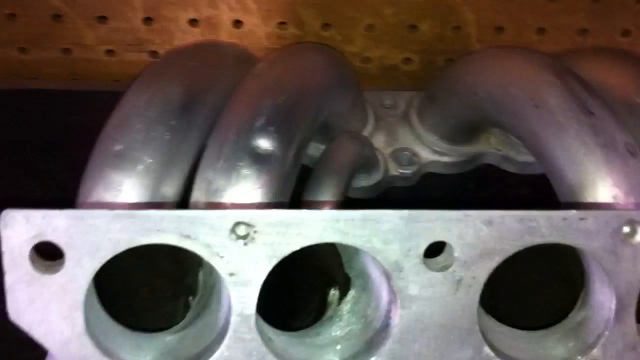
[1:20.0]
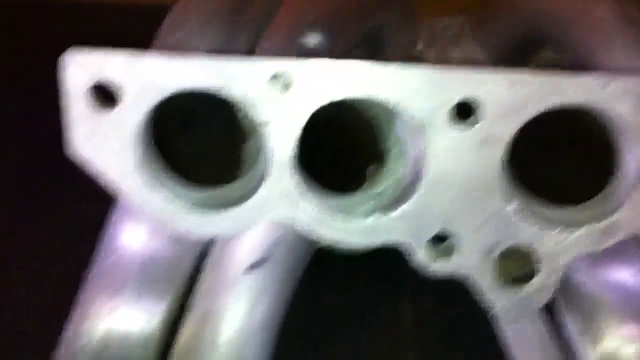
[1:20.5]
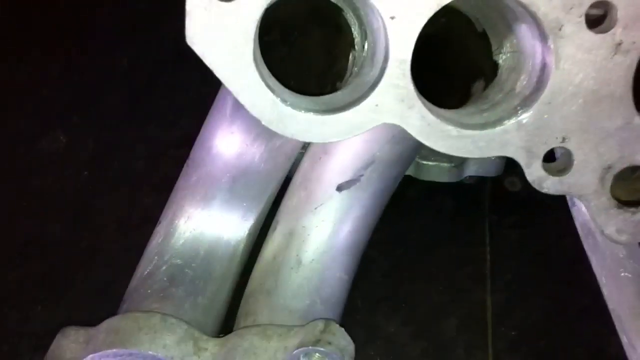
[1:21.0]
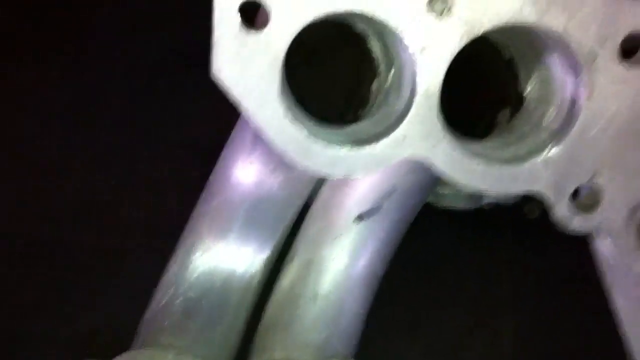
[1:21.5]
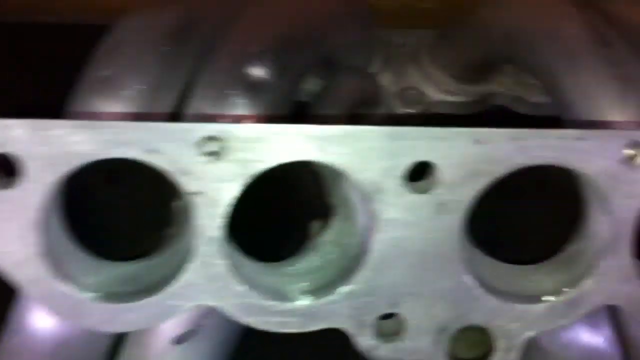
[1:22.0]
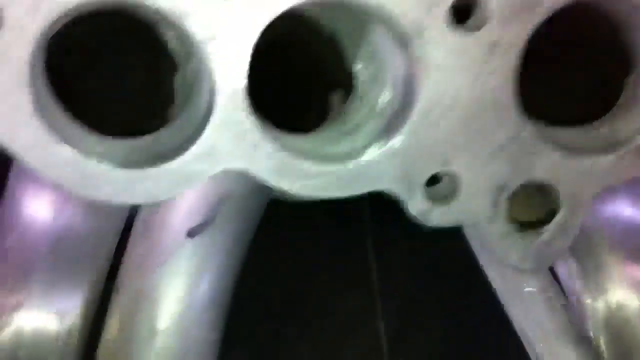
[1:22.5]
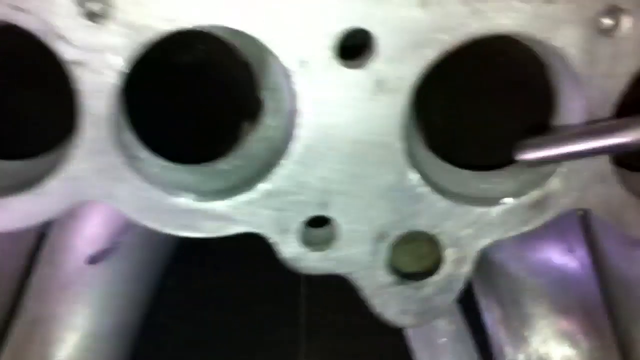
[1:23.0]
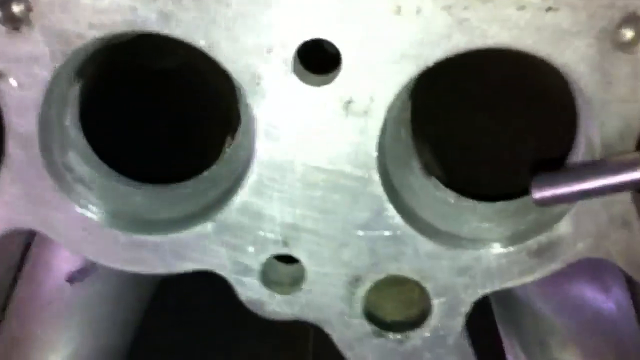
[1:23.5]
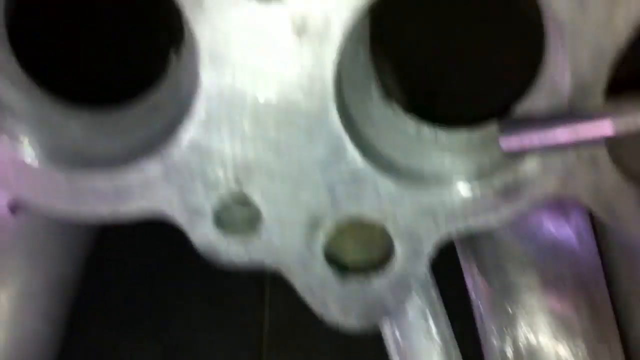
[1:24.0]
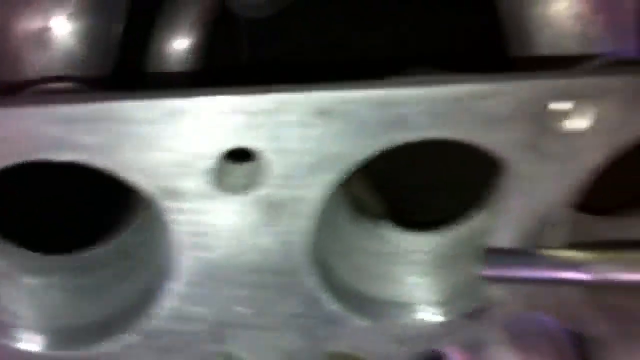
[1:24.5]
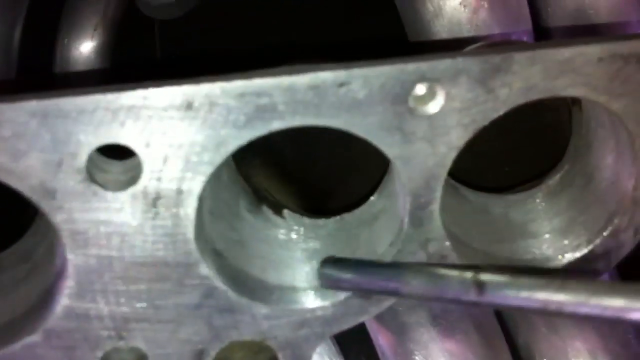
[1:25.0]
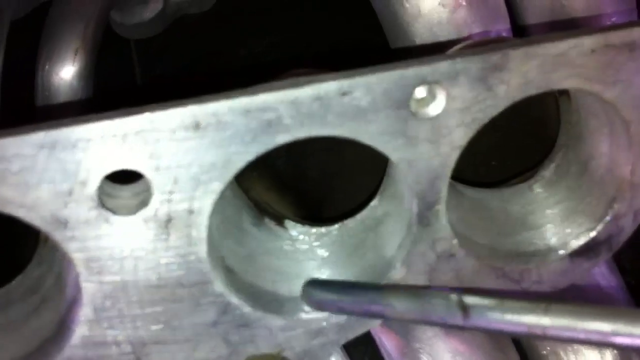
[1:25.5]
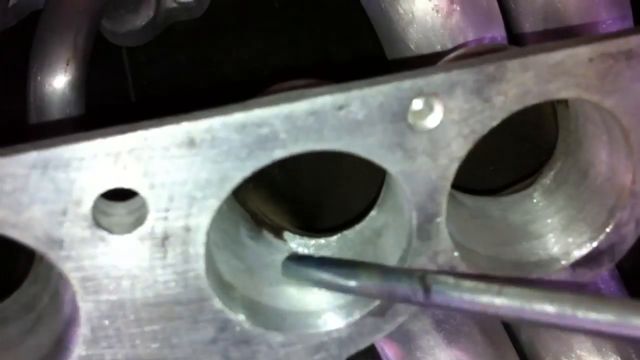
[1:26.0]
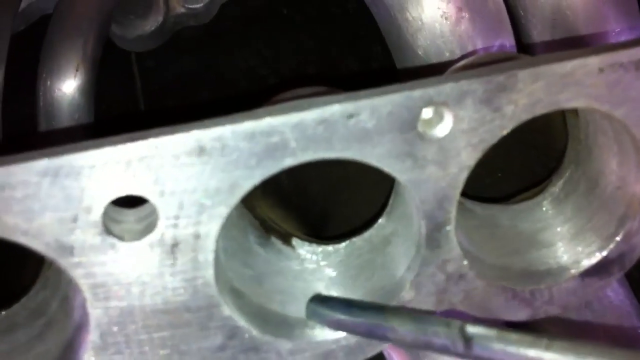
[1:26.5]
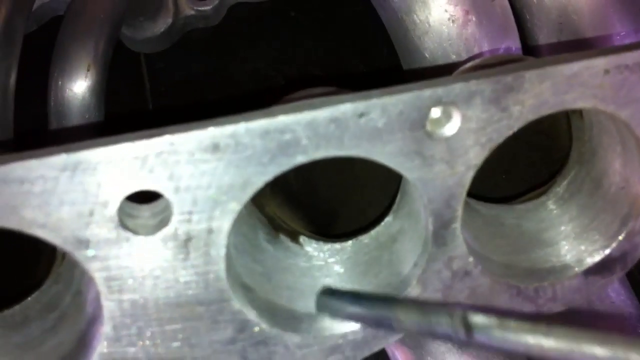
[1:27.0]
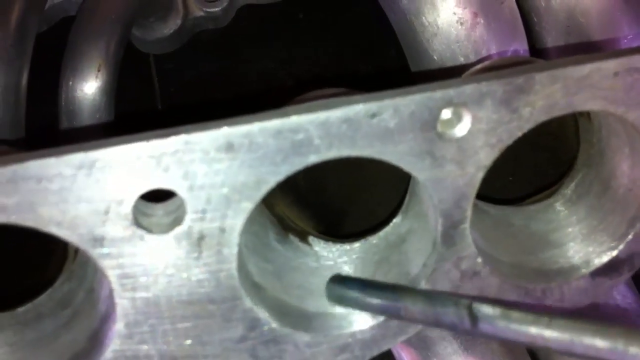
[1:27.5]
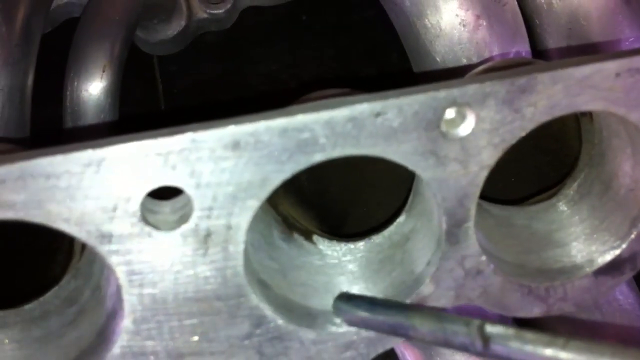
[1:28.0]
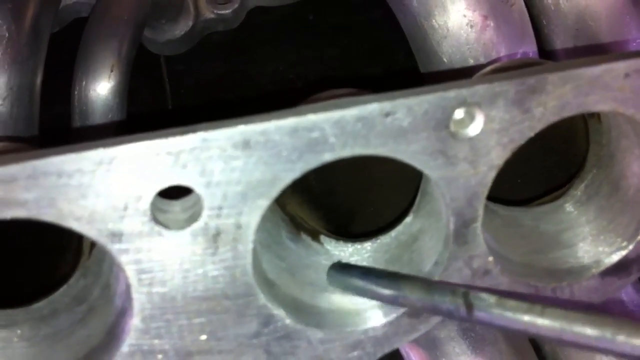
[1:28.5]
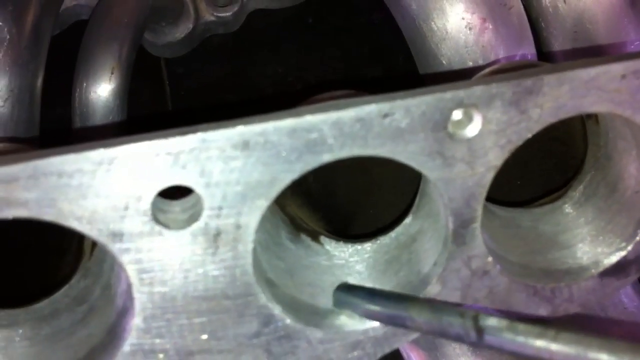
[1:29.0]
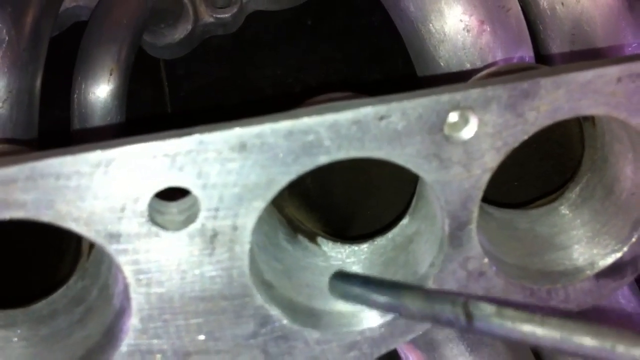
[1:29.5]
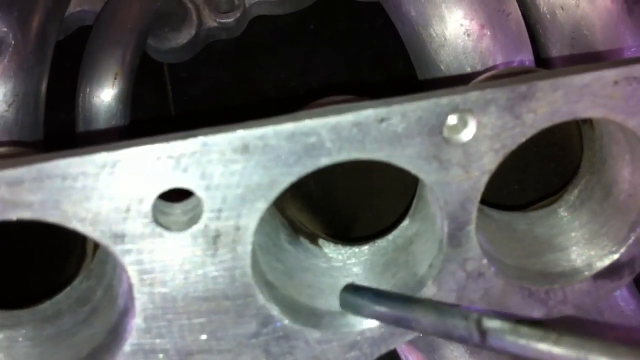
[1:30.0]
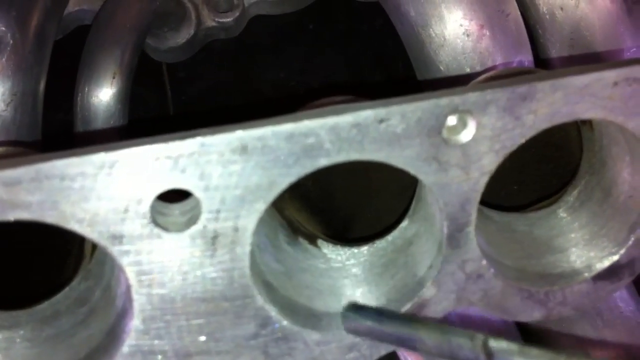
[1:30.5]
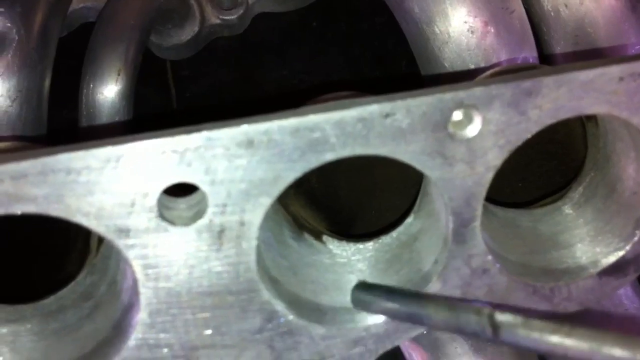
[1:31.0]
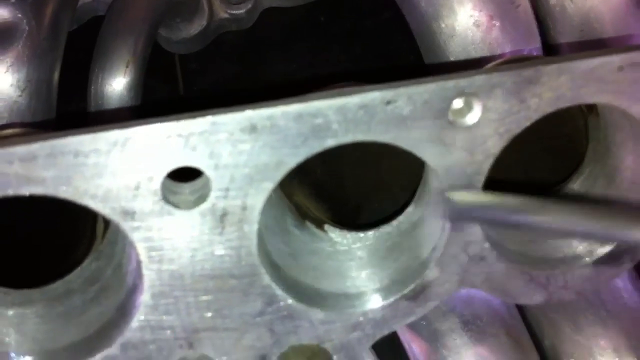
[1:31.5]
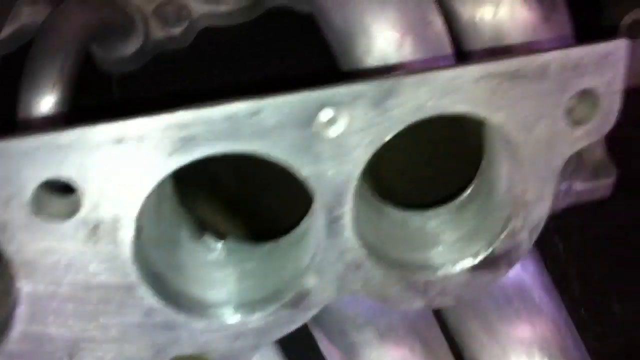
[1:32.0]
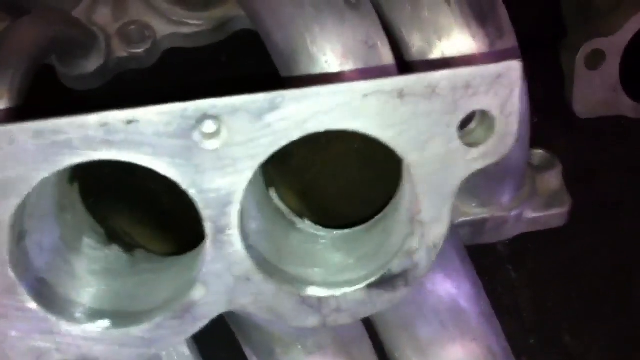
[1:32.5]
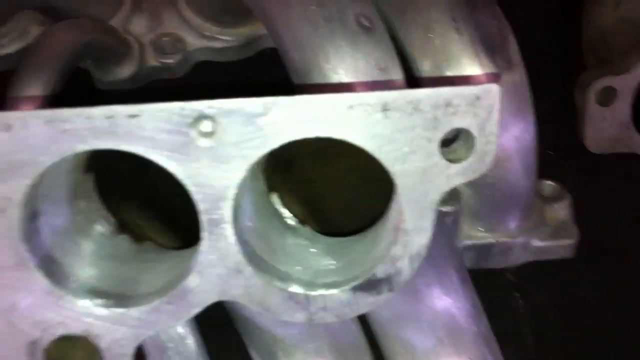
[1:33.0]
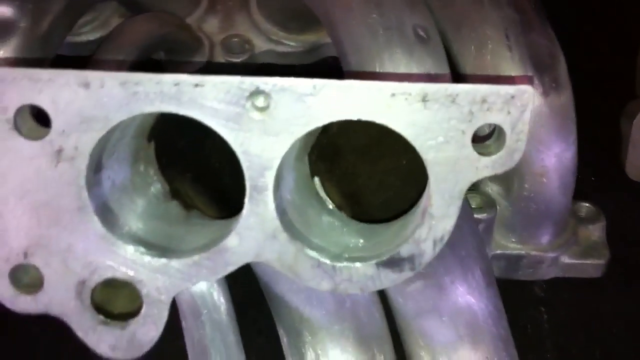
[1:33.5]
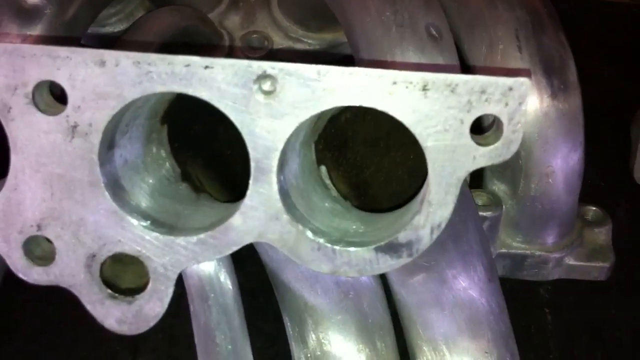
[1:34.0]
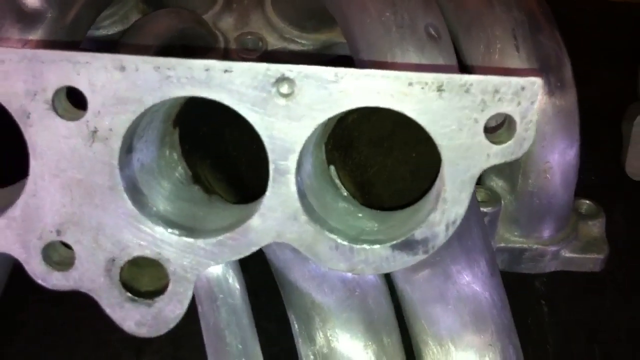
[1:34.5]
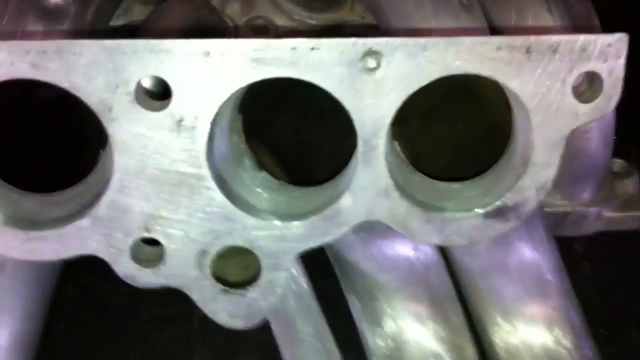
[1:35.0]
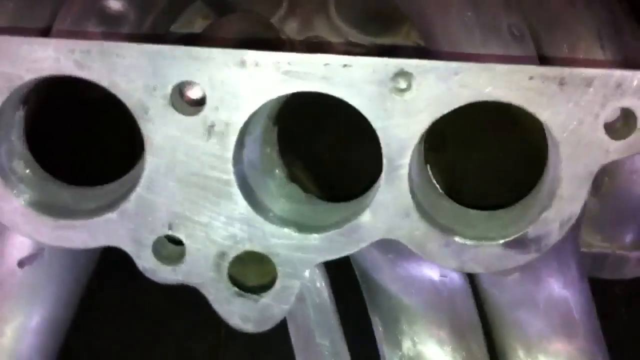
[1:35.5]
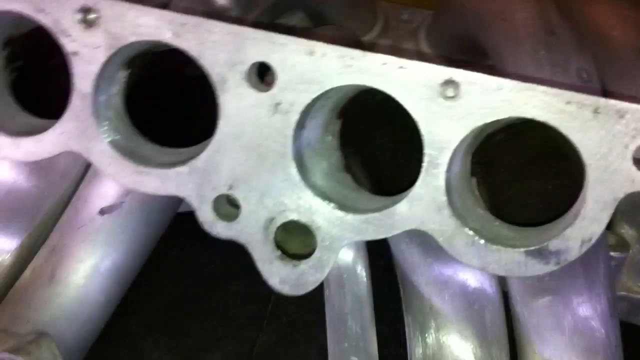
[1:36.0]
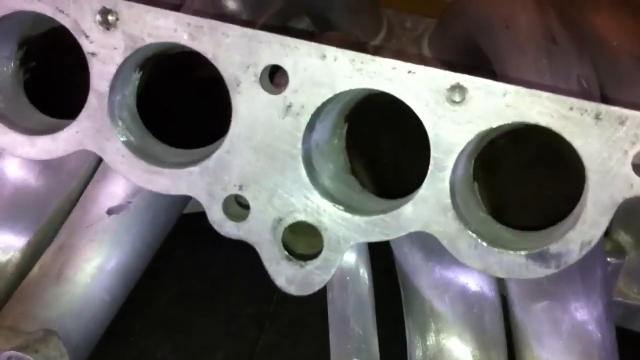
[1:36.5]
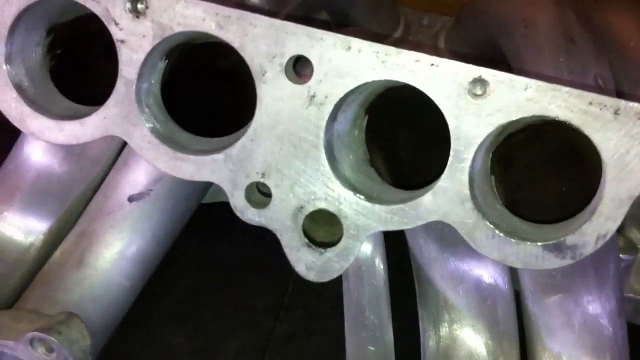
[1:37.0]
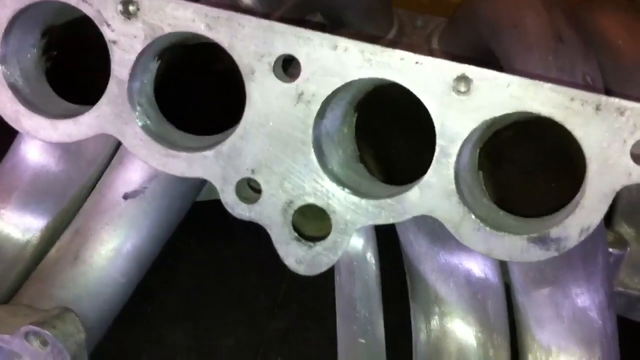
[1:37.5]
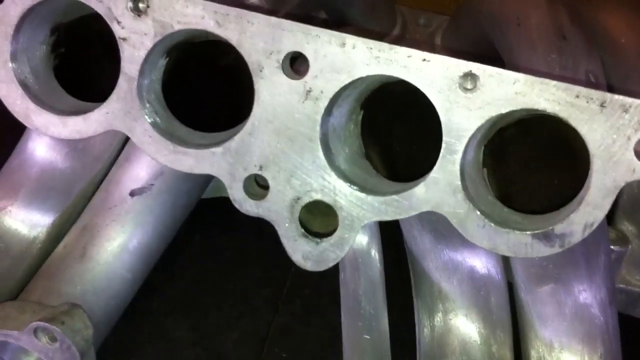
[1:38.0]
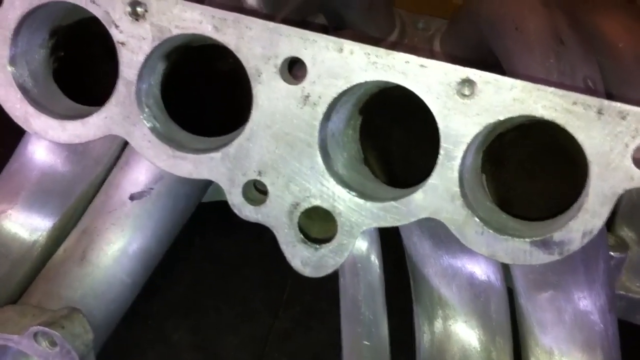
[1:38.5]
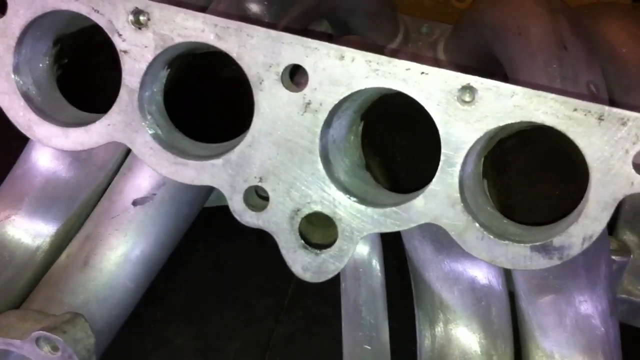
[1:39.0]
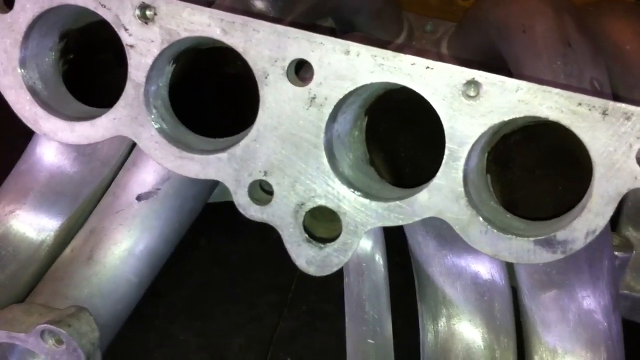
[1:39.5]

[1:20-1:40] A close-up shows a plate with big holes as a person tests the sides of the holes with a metal rod, scraping the side a little very carefully, then pulling the rod out and testing another one. This plate connects the ends of the curved metal pipes. Down the holes it is dark. When the camera pulls back, the holes are seen connecting to the pipes, which curve around. There appear to be two sets of plates. The holes look like they have been cleaned up or resurfaced: they are very clean and have an additional layer around the inside that looks fairly new, like a new coating right near the edge of the opening.